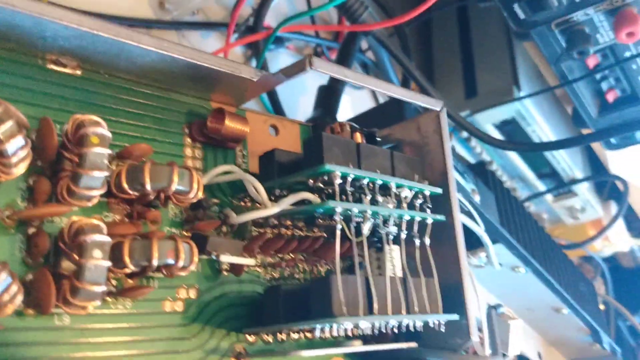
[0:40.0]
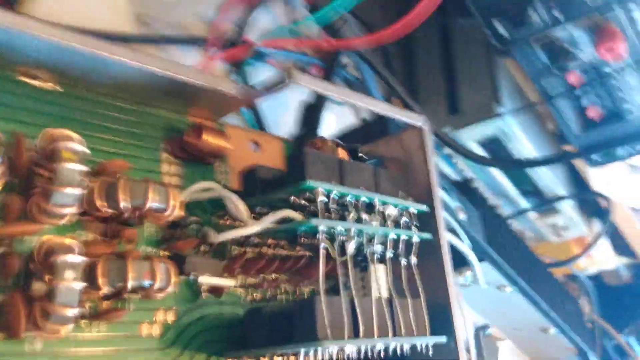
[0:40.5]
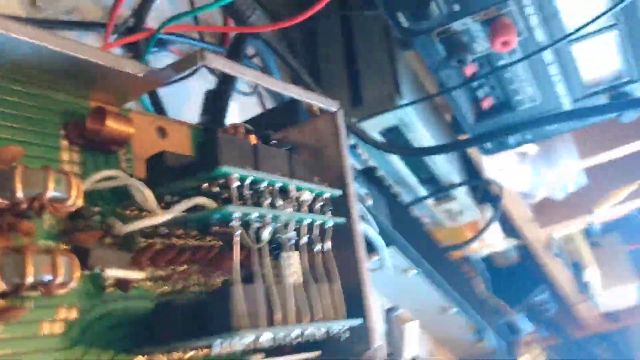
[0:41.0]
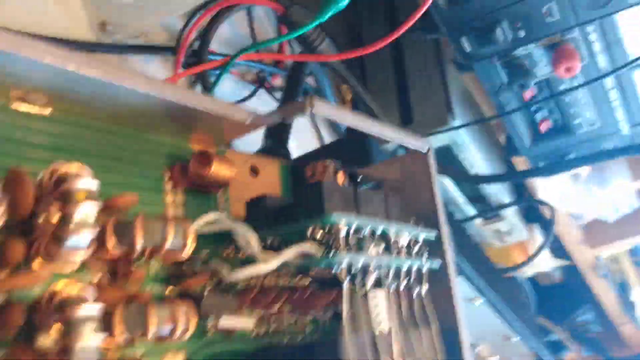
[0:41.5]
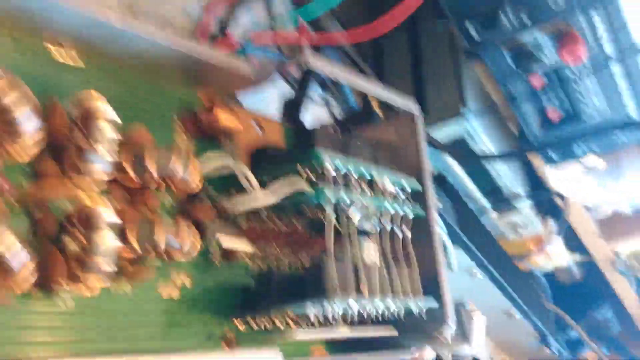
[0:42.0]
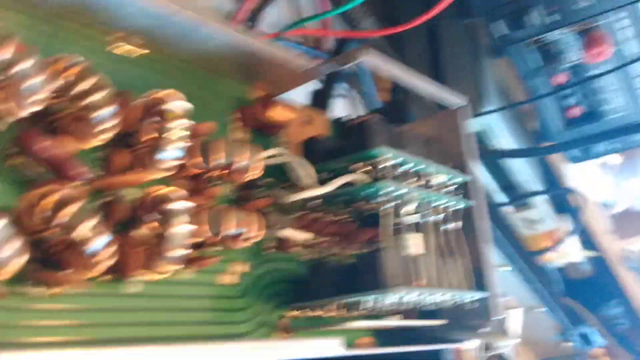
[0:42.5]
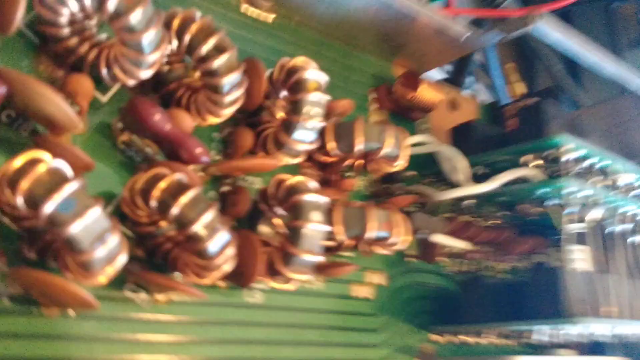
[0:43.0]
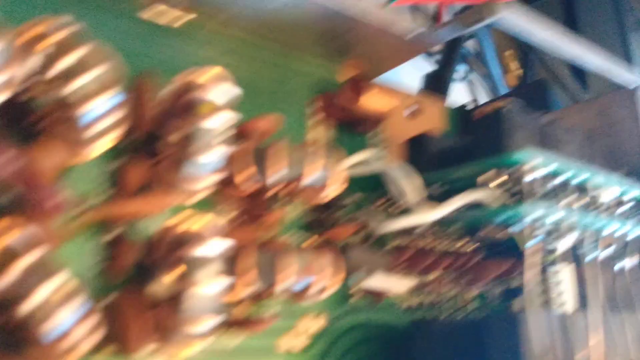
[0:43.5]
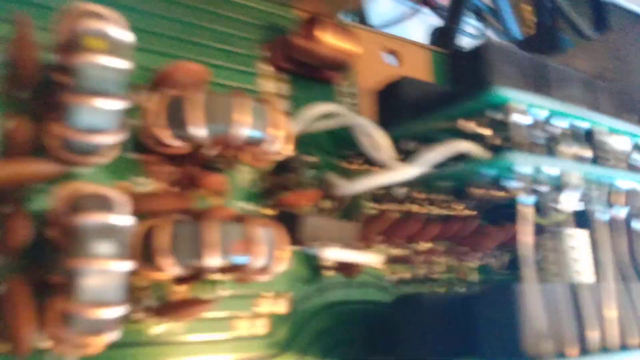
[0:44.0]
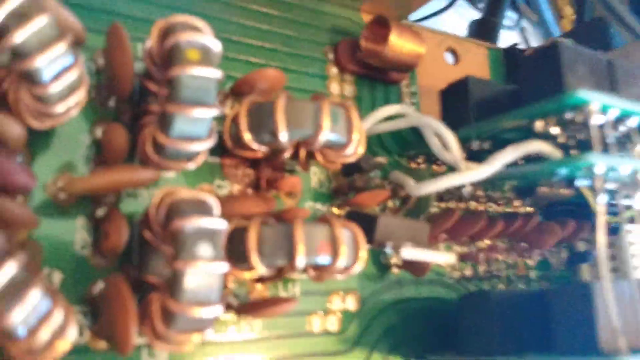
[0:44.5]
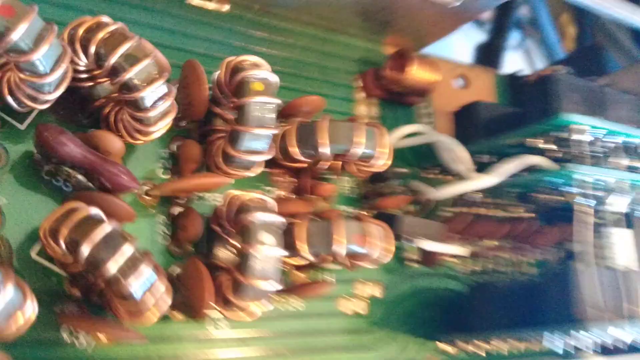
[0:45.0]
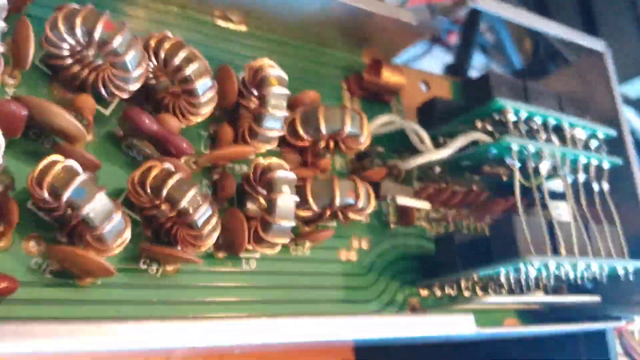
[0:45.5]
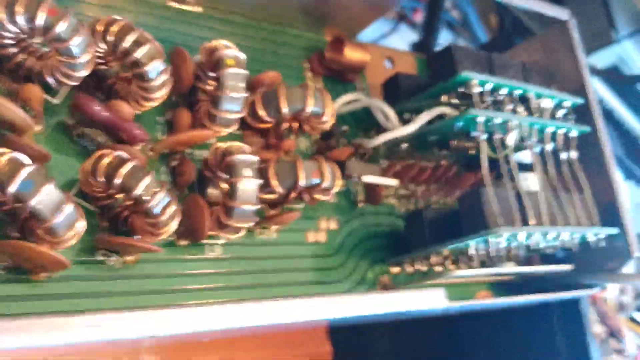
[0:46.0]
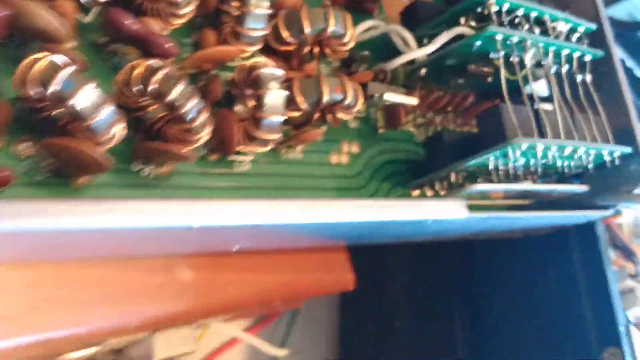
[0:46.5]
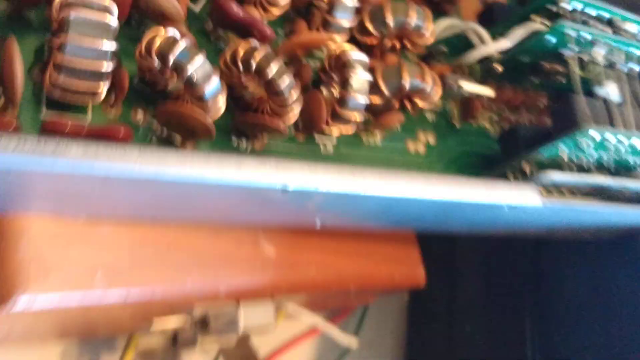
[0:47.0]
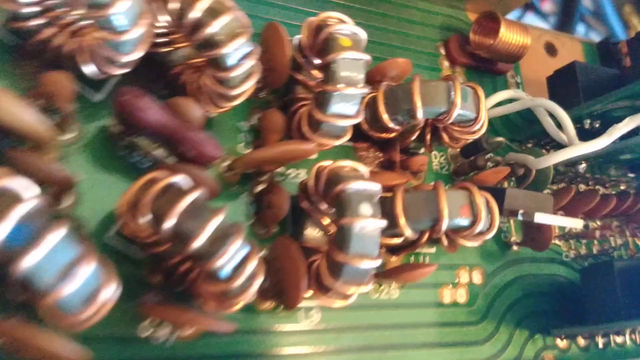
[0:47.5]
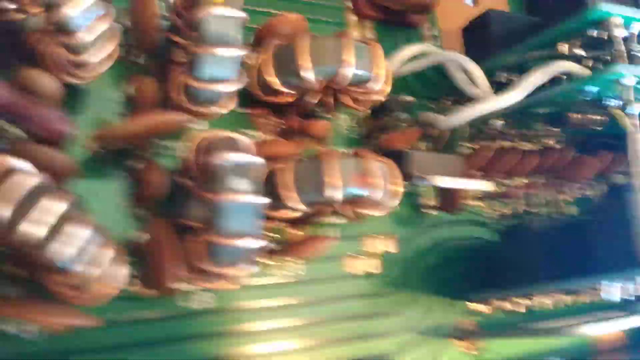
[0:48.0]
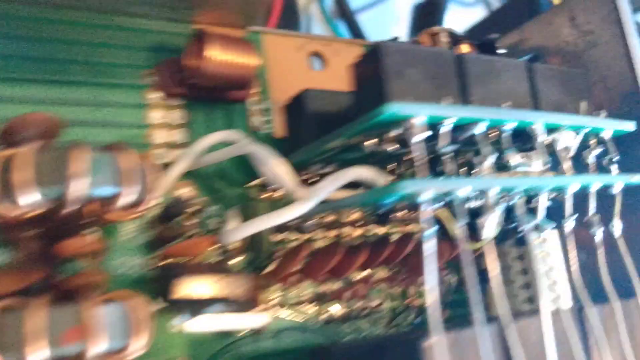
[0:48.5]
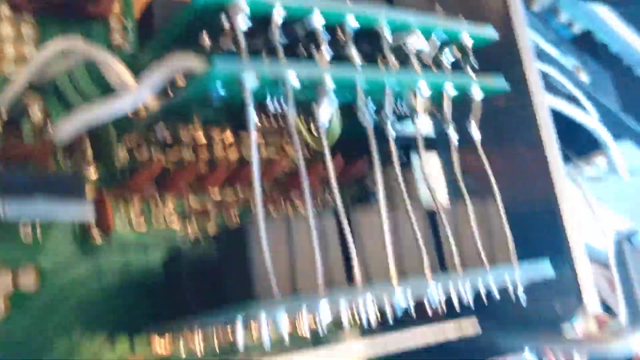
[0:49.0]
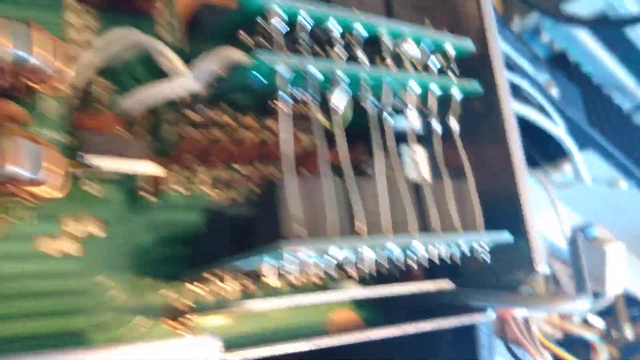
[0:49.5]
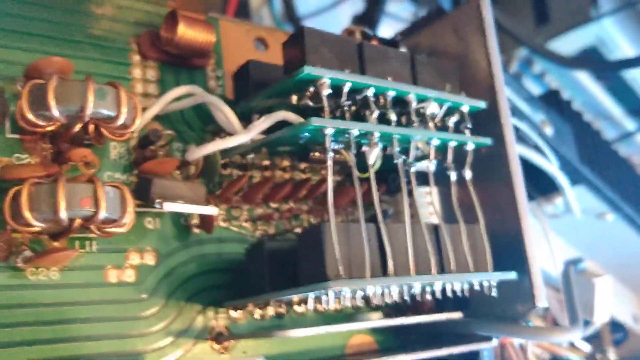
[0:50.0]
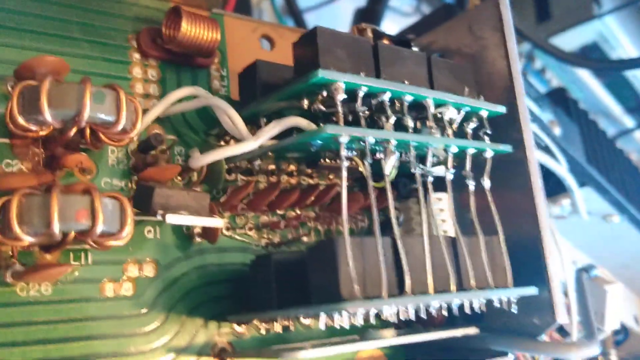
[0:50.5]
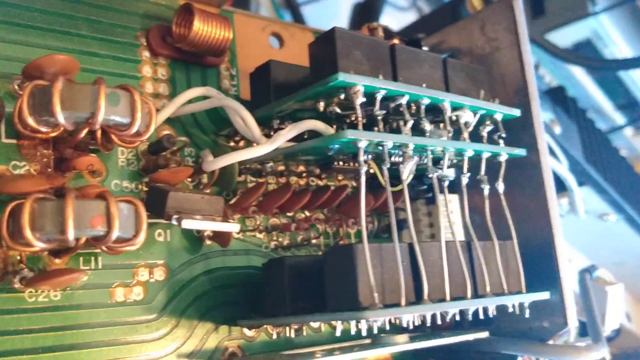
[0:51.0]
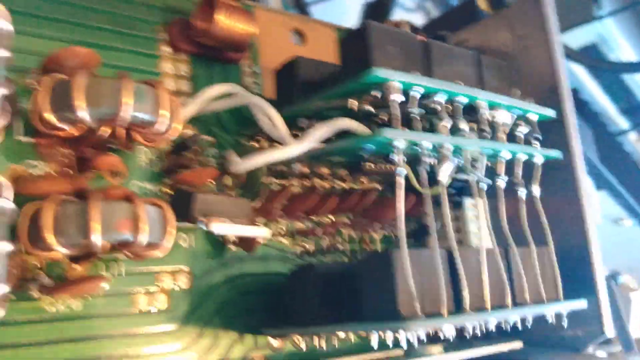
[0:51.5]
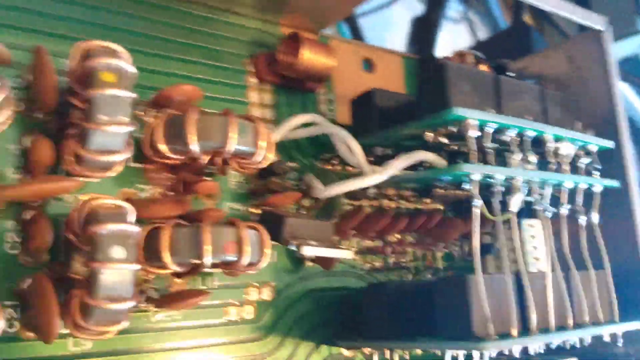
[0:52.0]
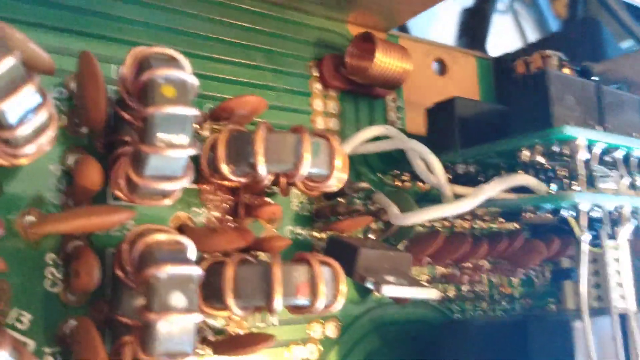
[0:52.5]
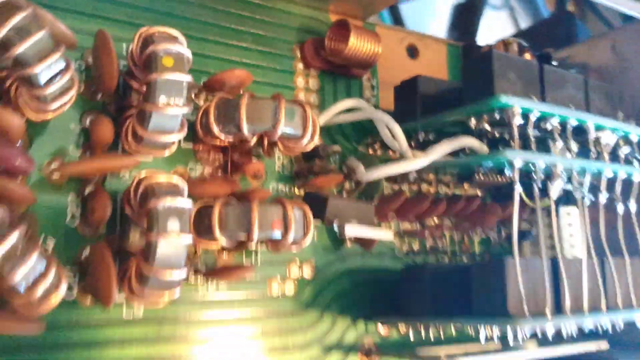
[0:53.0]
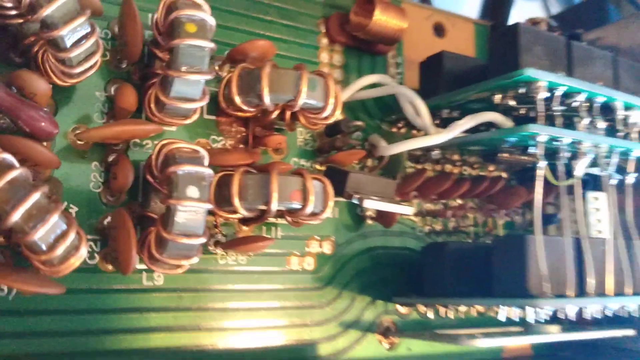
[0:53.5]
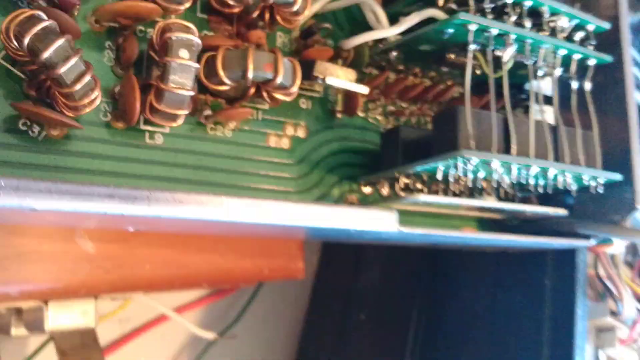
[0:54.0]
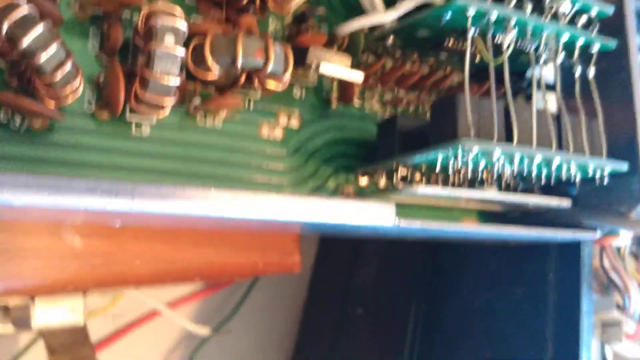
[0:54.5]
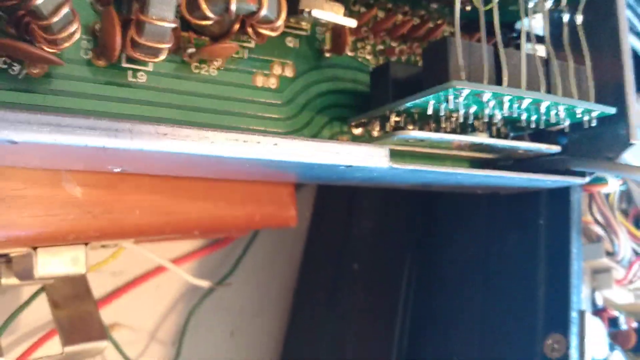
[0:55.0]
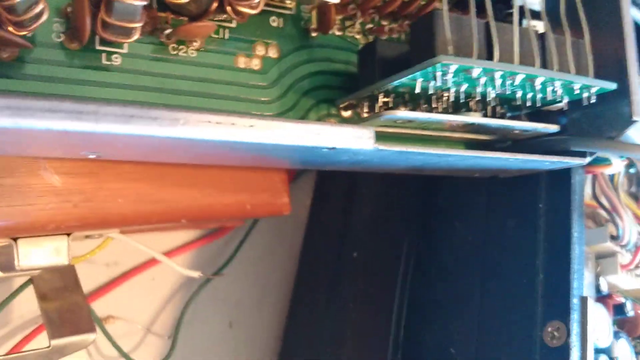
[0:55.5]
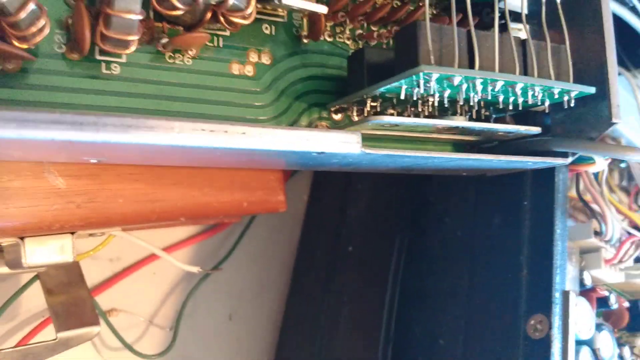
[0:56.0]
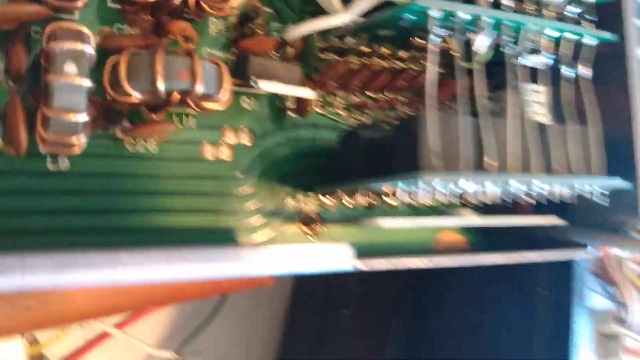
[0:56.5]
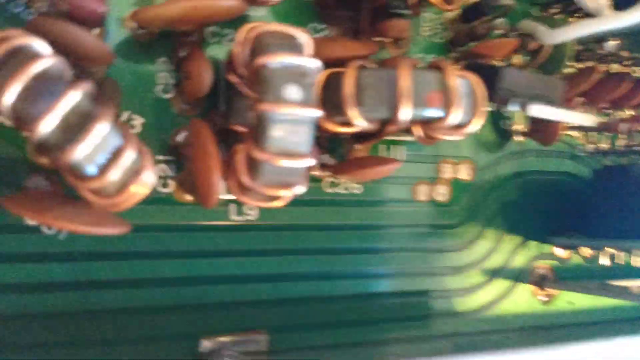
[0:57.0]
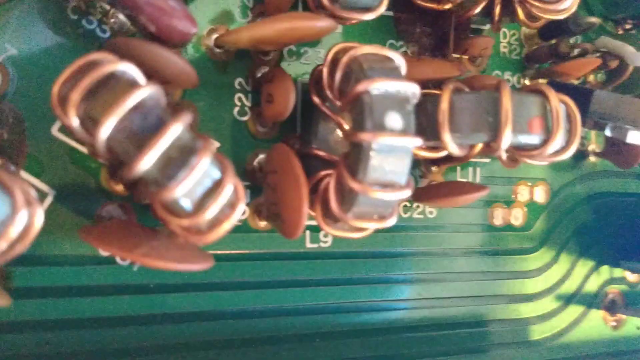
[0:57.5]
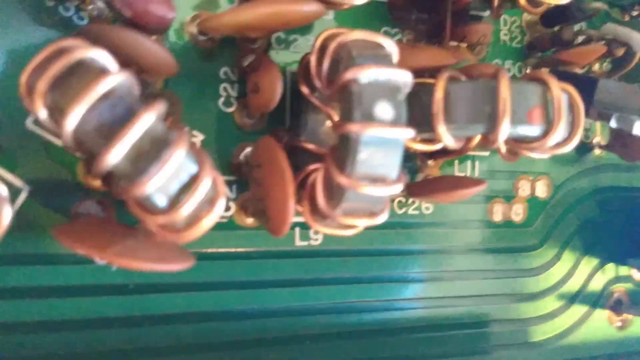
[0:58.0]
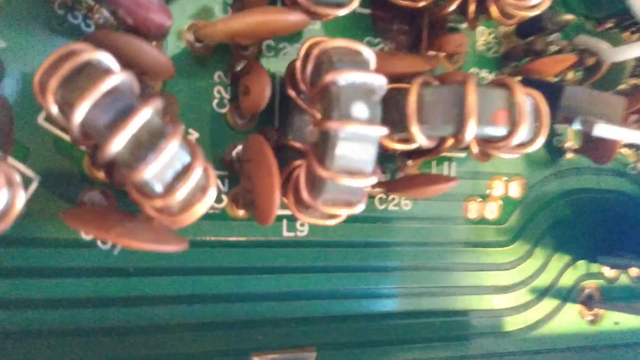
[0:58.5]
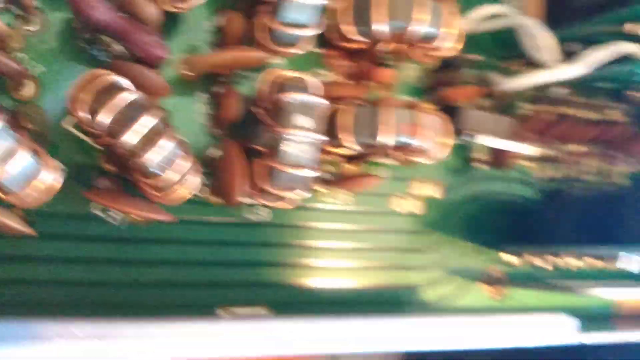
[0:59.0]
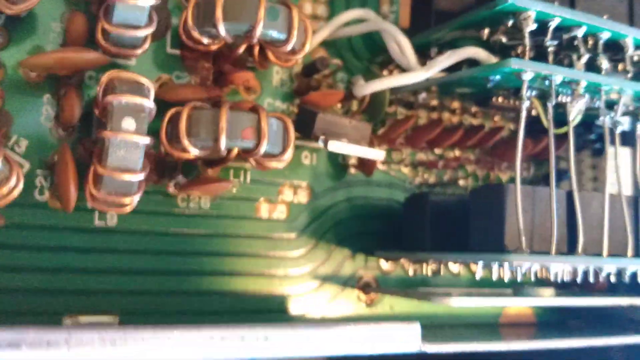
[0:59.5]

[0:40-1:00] The camera starts to slow down, looking at what appear to be circuit boards on the right side of the same box. There are two of them, parallel to each other, with wires along the top edge going to another circuit board that is also parallel. White wires come off the circuit boards toward the copper coils. The camera zooms in and out and moves left and right, moving around almost nauseatingly. At the base of the circuit boards are black boxes, probably soldered into the boards; the top circuit board appears to have six of them and the bottom one another six. About eight wires appear to stretch from the top of one circuit board to the other. A cylinder made of coiled copper wire is above that, a little to the left.